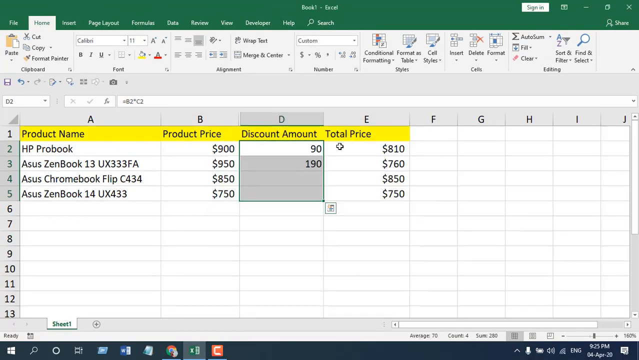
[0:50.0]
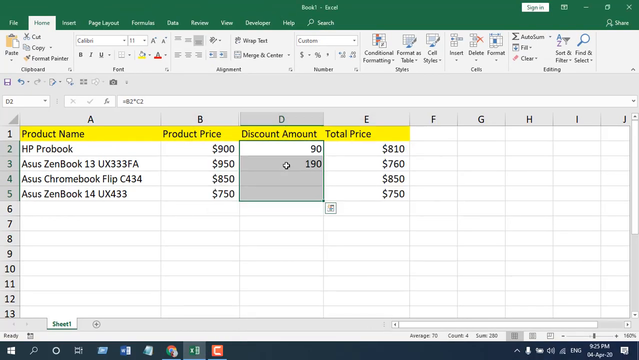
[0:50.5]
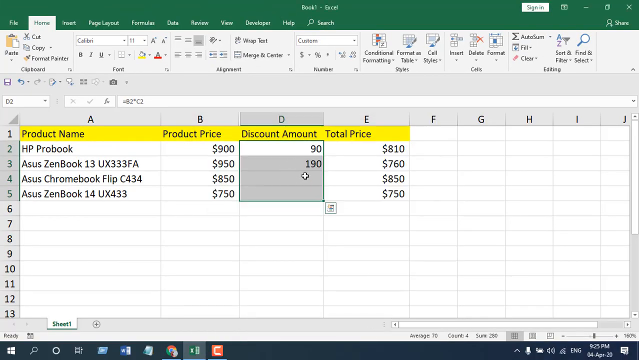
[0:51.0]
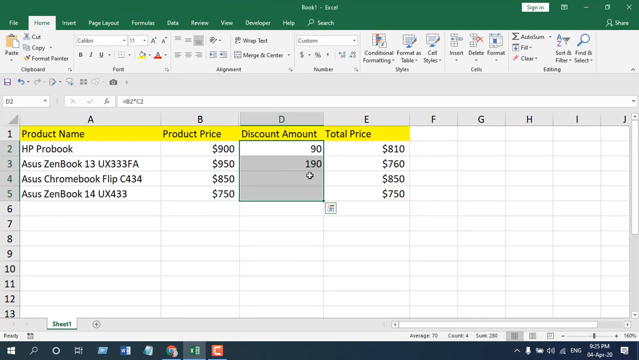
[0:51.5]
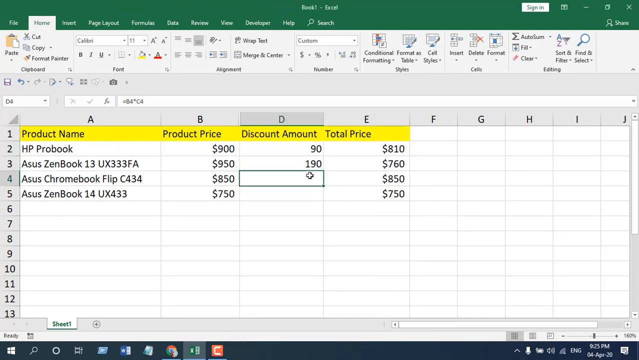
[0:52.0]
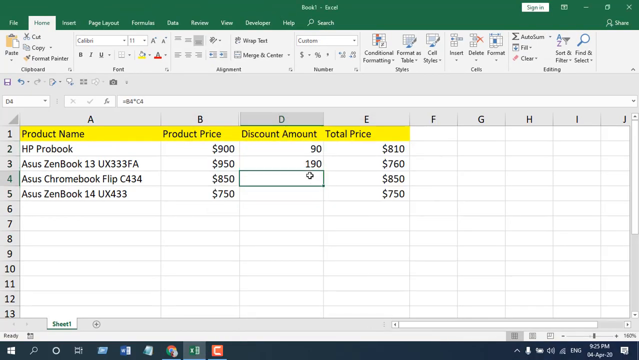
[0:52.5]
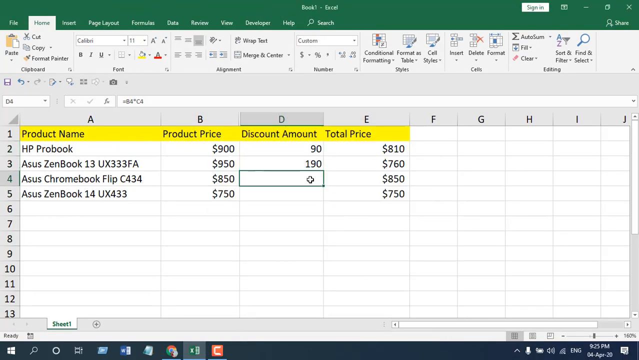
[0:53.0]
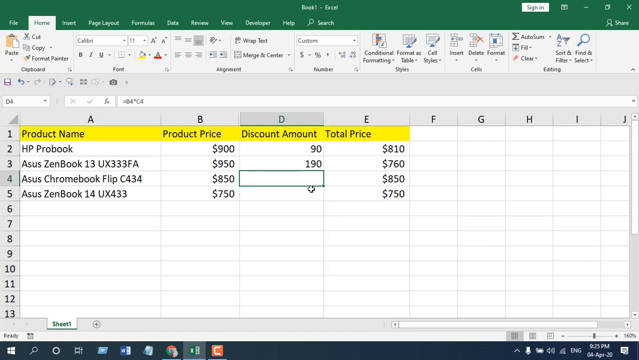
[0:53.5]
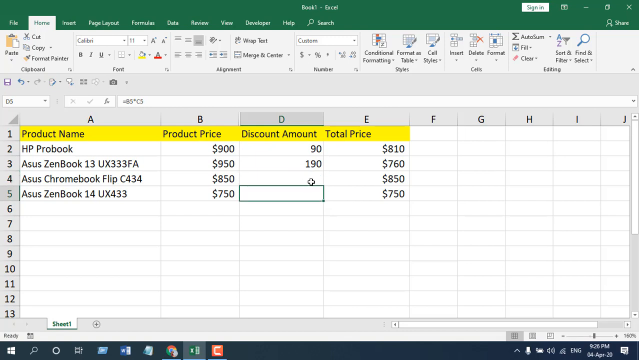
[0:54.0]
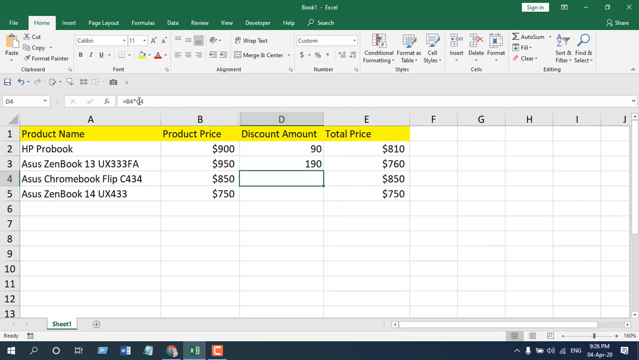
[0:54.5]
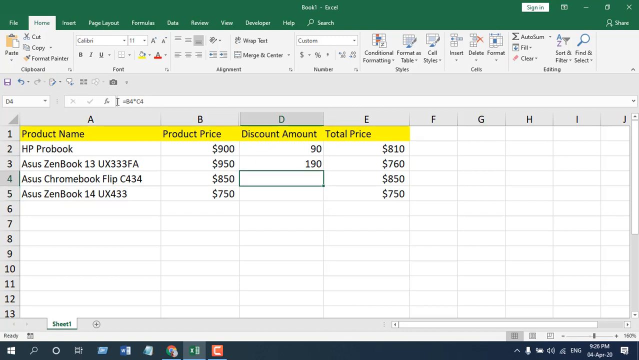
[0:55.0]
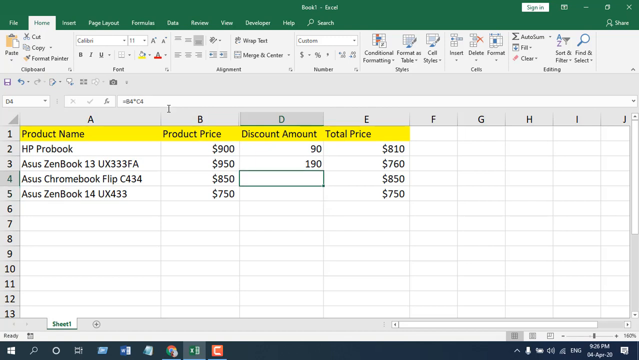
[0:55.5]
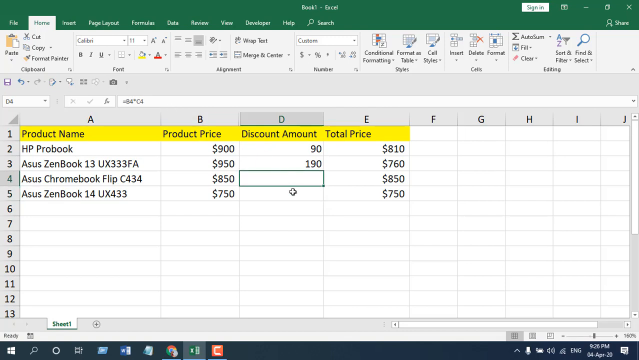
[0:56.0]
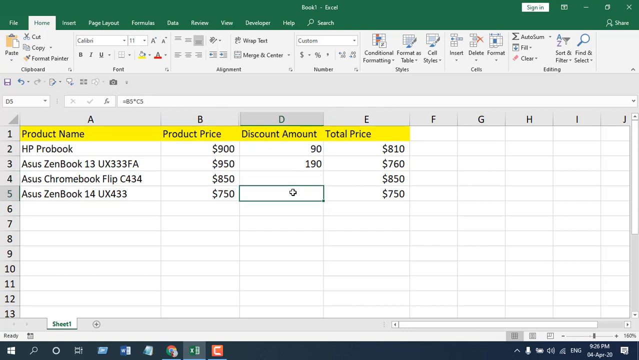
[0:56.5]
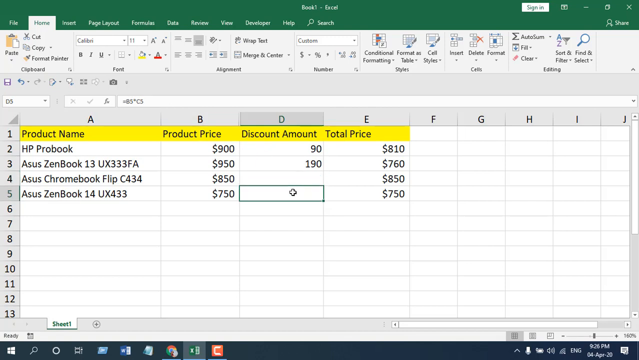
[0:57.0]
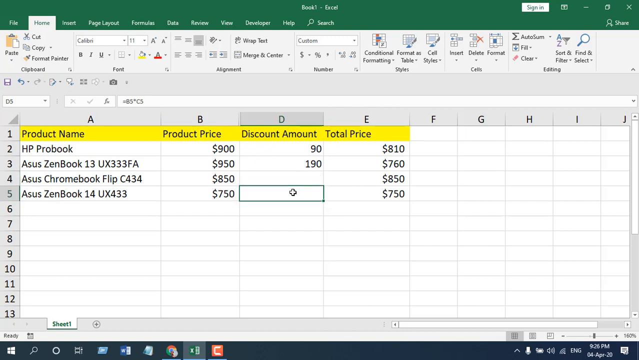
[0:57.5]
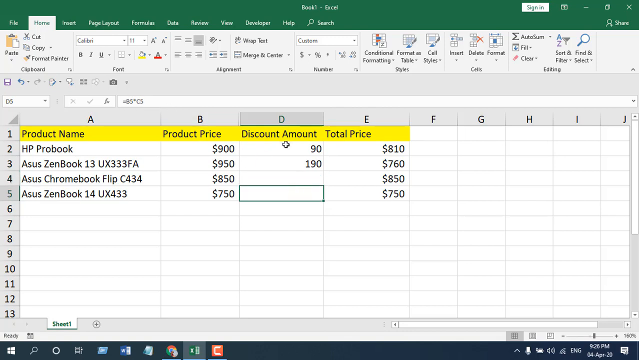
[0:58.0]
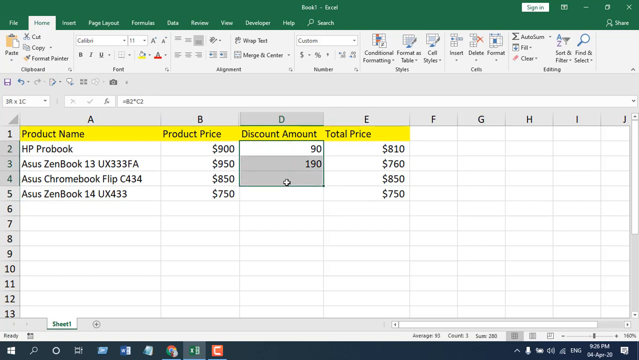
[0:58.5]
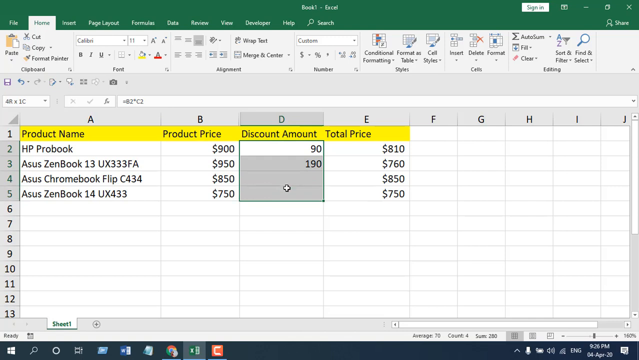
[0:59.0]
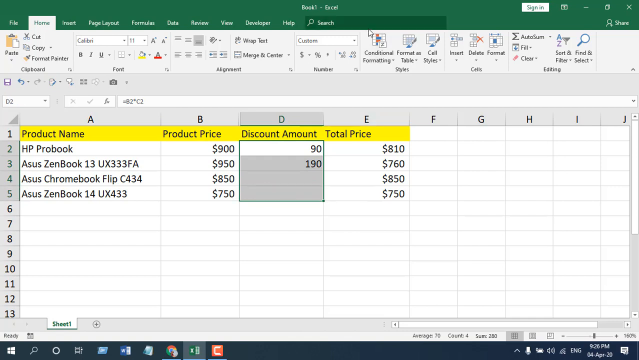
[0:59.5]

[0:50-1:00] The Excel spreadsheet lists four products with their product prices, discount amounts and total prices after the discounts. The HP ProBook has a product price of $900 and a discount of $90, making its total price $810. The Asus ZenBook 13 UX333FA has a product price of $950 and a discount amount of $190, for a total of $760. The Asus Chromebook Flip C434 has a product price of $850, and its discount amount cell is blank, with no number in it, so its total price is the same as its product price, $850. The Asus ZenBook 14 UX433 has a product price of $750, and its discount amount is also blank, so its total price is the same, $750. The user moves the mouse cursor around on the Discount Amount column, highlights the entire column and then clicks a drop-down menu labeled "Custom."